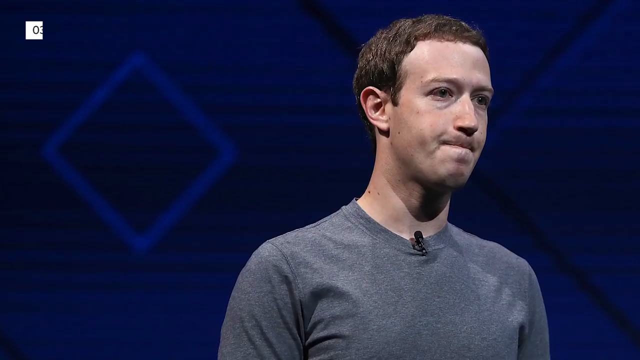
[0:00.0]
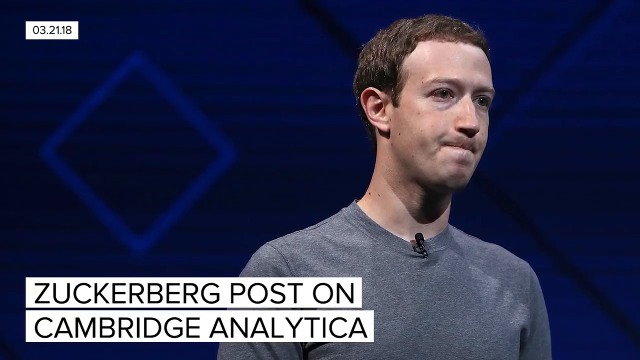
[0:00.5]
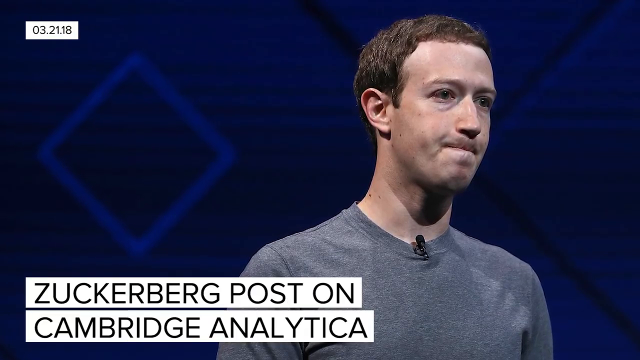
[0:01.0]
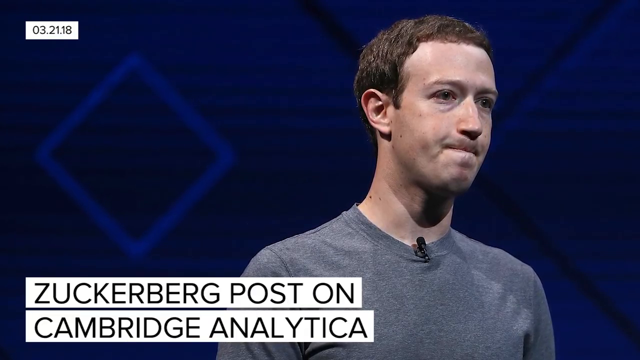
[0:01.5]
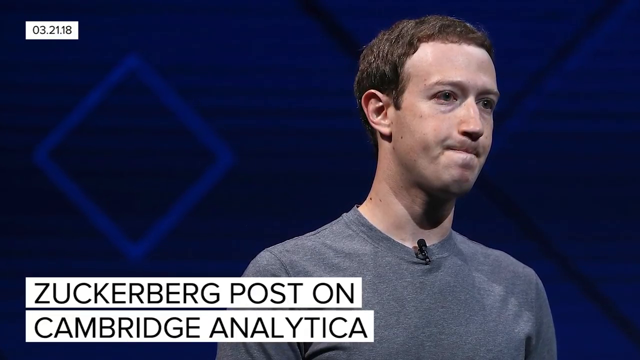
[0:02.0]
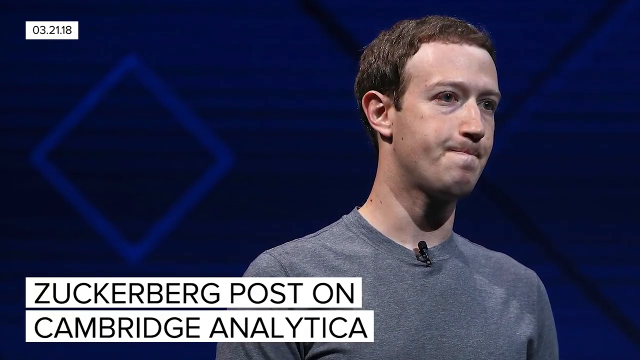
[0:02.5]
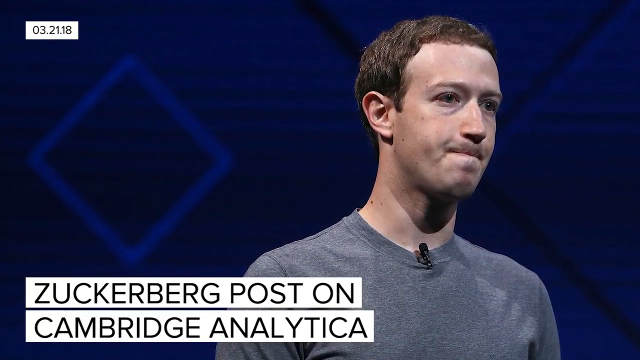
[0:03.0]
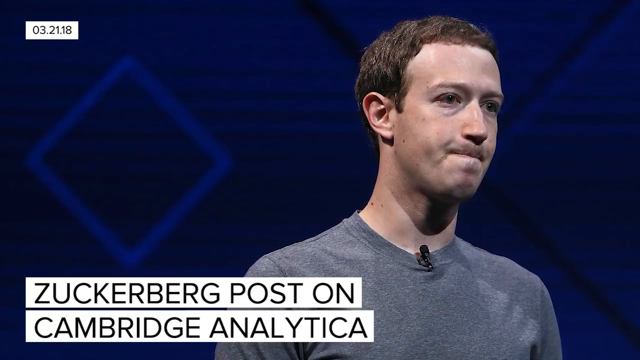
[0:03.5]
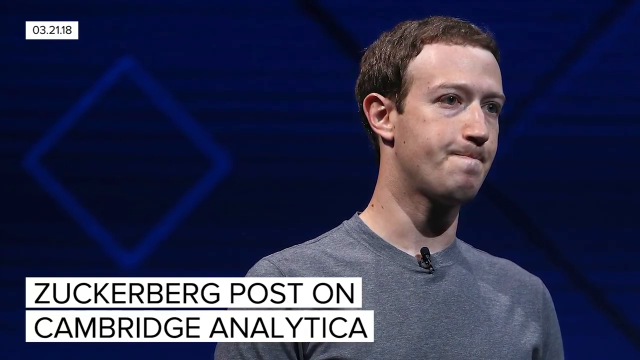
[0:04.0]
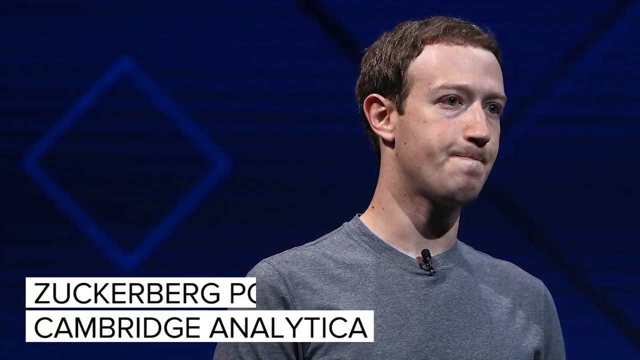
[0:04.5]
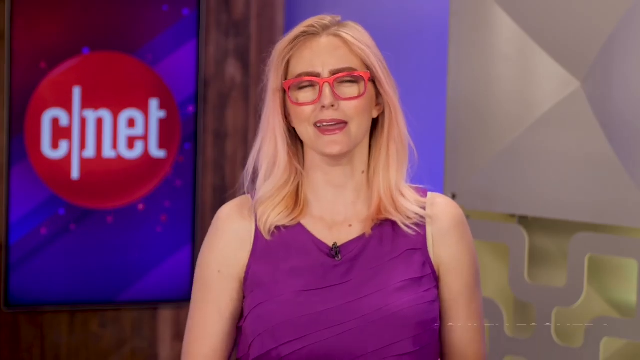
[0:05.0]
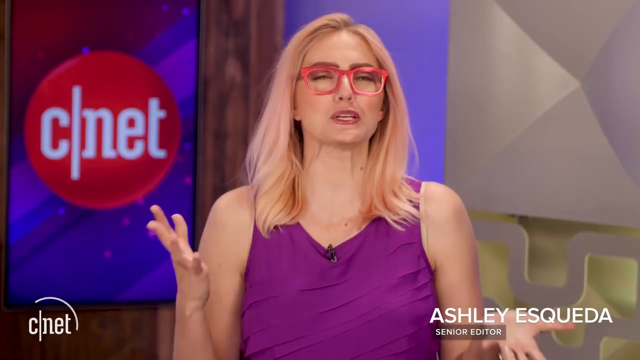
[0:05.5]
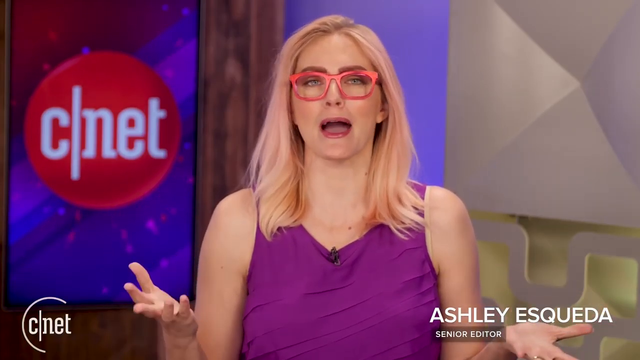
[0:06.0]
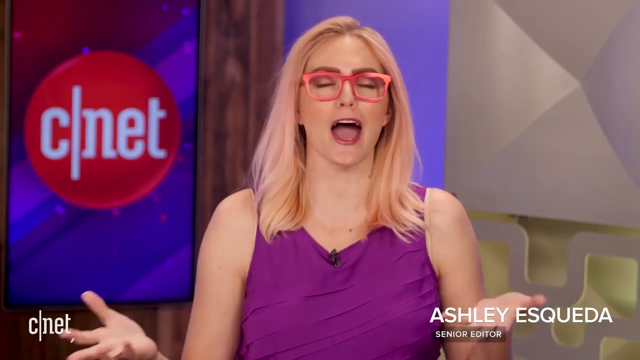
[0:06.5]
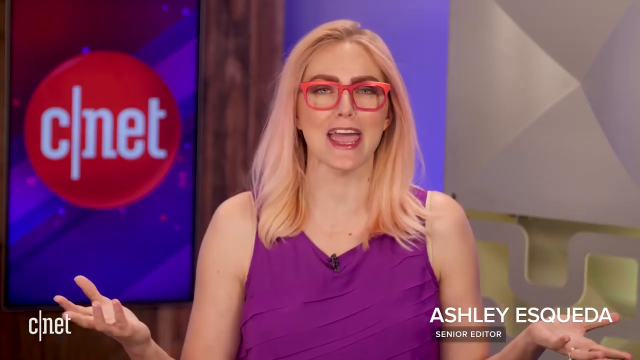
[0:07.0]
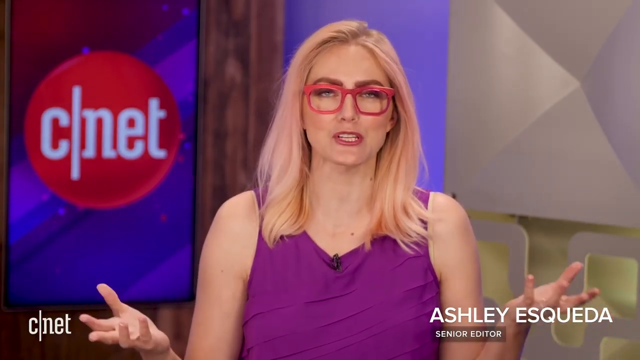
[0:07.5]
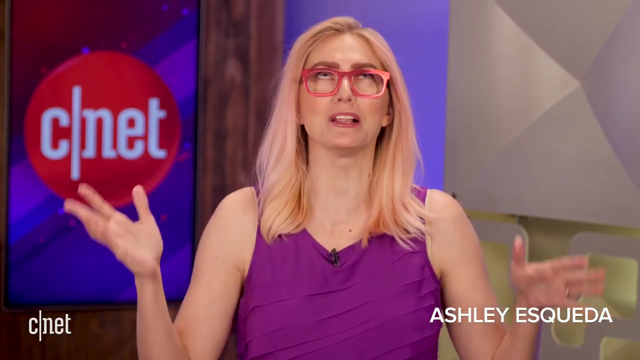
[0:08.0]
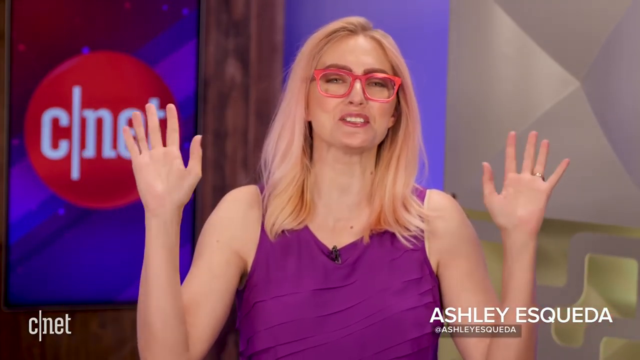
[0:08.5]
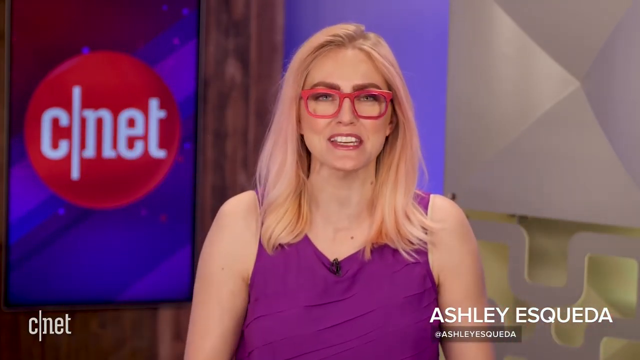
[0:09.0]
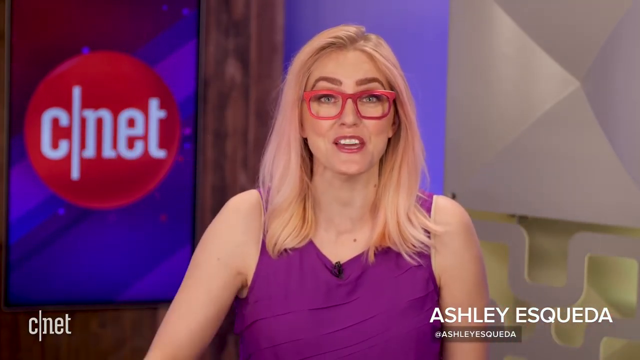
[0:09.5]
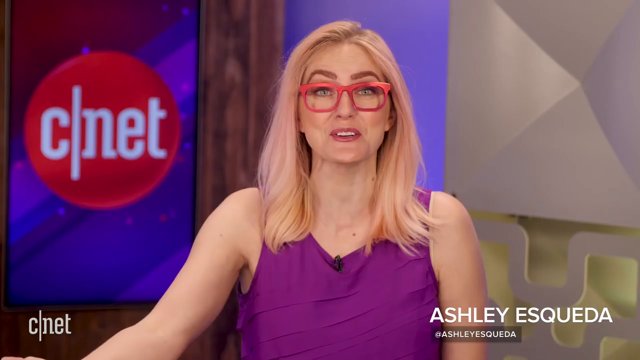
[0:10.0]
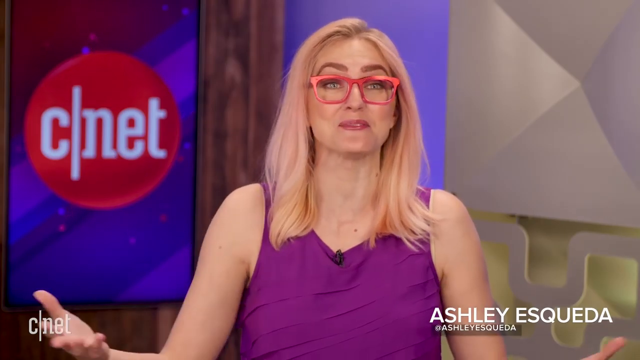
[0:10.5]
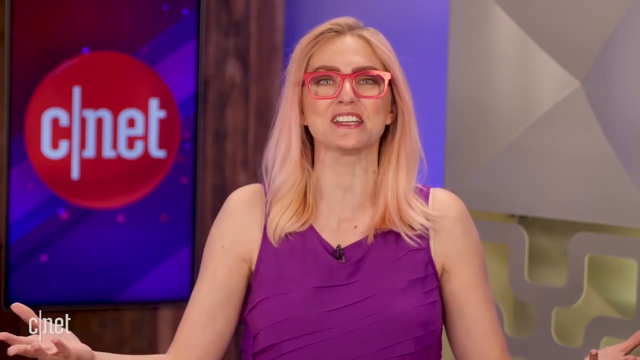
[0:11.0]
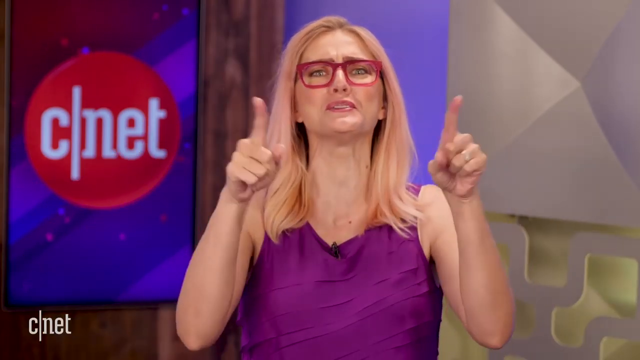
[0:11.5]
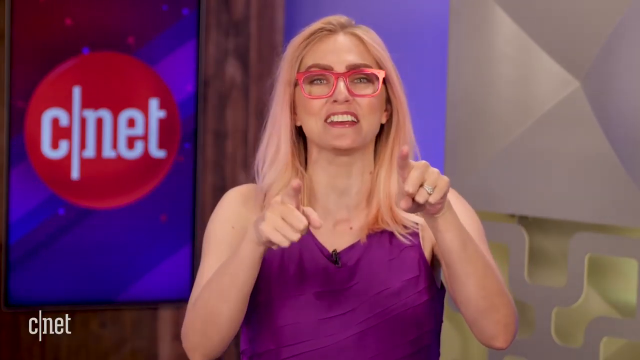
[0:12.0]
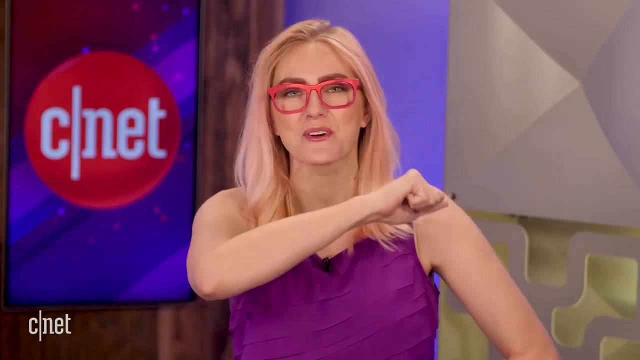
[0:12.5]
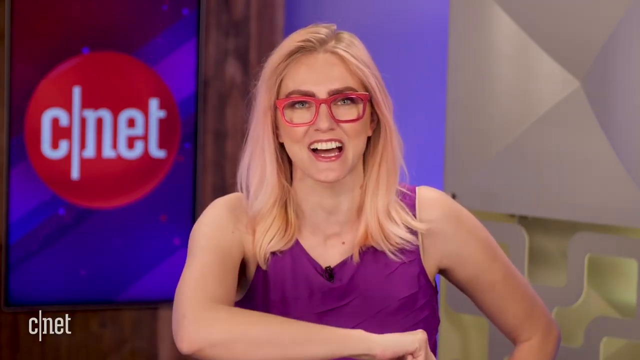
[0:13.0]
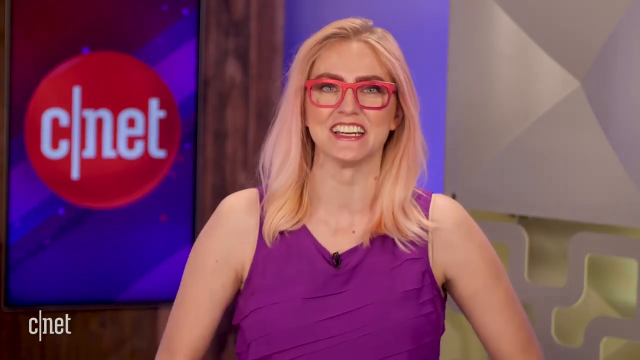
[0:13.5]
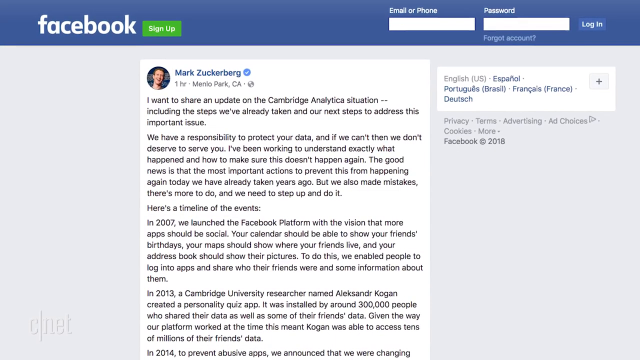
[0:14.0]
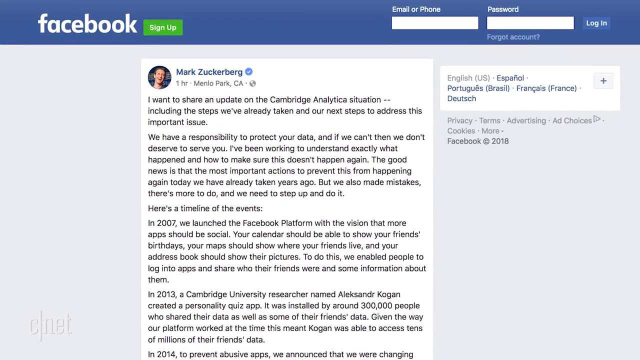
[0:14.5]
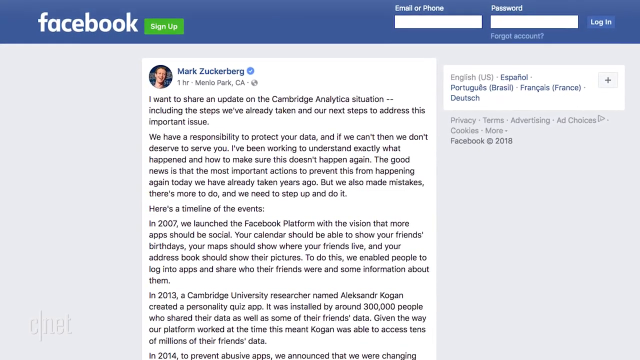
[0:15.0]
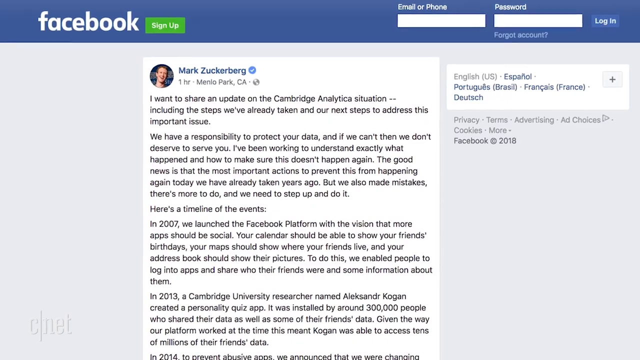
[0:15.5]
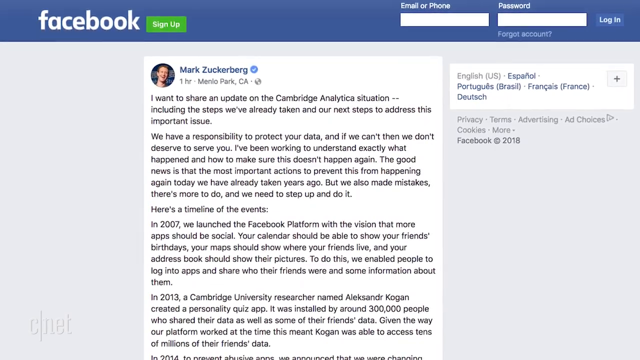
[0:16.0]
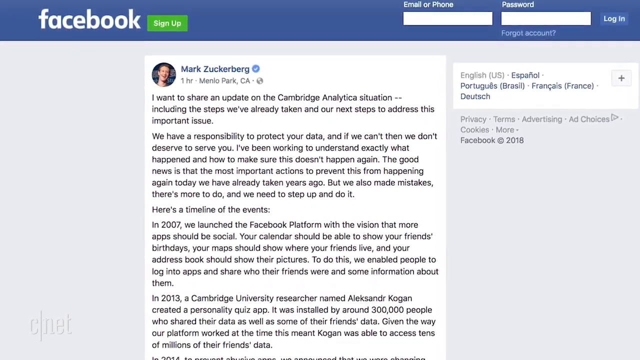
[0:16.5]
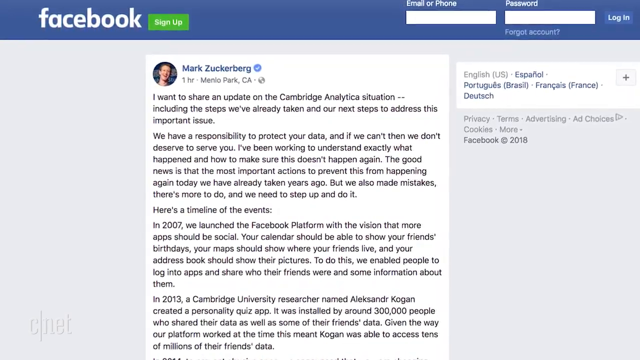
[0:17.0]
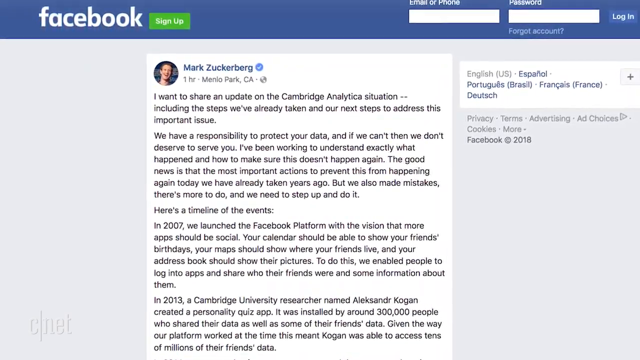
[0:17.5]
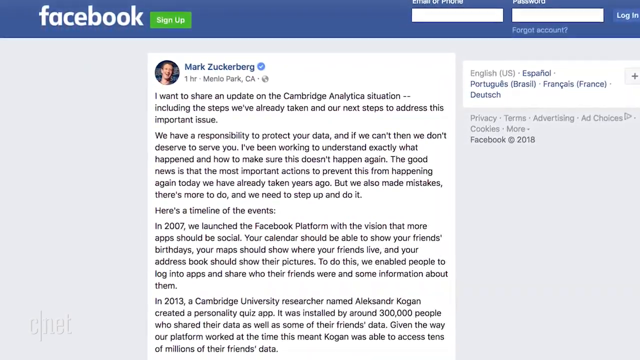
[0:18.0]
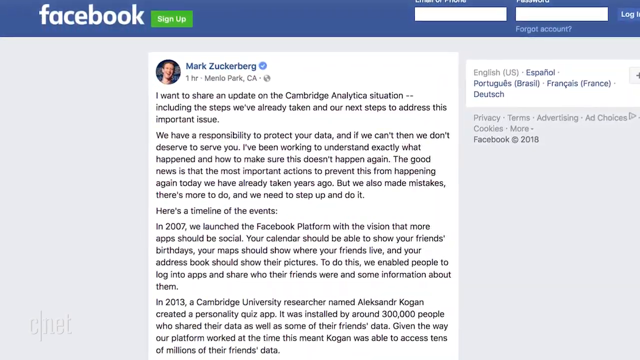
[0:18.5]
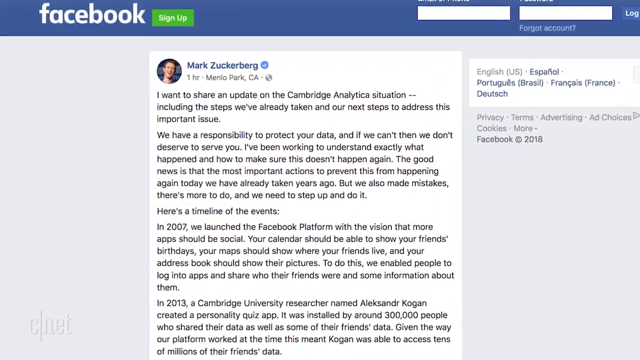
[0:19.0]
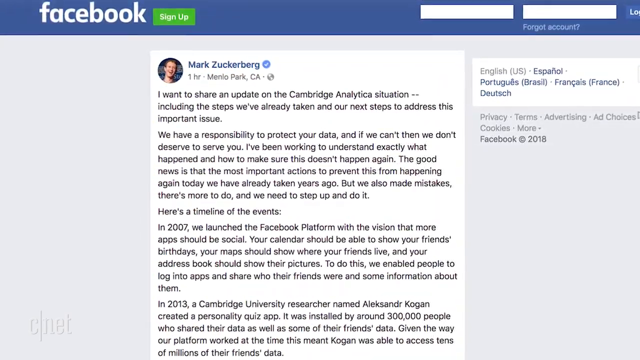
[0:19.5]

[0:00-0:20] The video opens on a Facebook post about Cambridge Analytica. A blonde woman with glasses, Ashley Escueda, who is a senior editor, talks with her arms moving all over the place; she wears a purple dress and kind of orange glasses and is very animated. She points at something and motions her hands as if to say "come on down," and the video moves to a Facebook post by Mark Zuckerberg. The print is tiny and goes by quickly, though part of it reads "I want to share an update on the Cambridge Analytica." A picture of Zuckerberg follows, in which he looks stressed and has very large eyes. He is standing in front of a blue background with a square turned sideways. The setting then changes to CNET, where a commentator appears in front of a somewhat odd background that is probably not real. Next comes a post about a 2013 Cambridge University researcher.